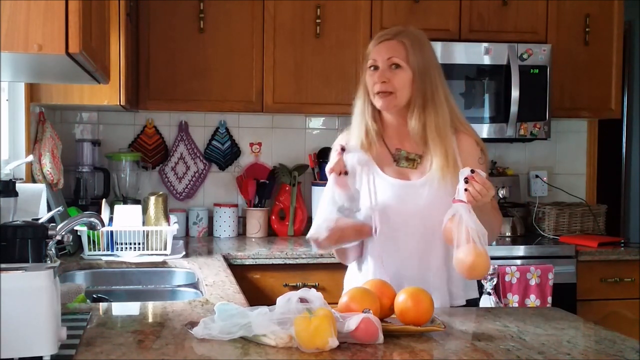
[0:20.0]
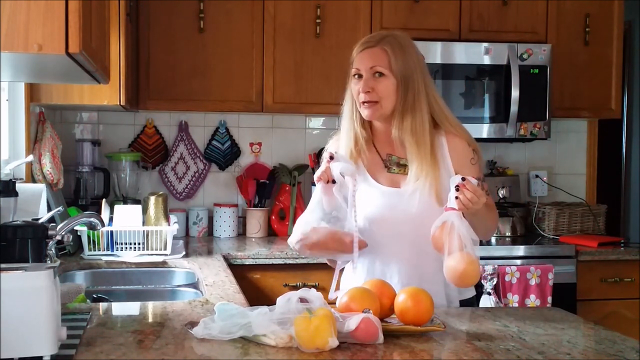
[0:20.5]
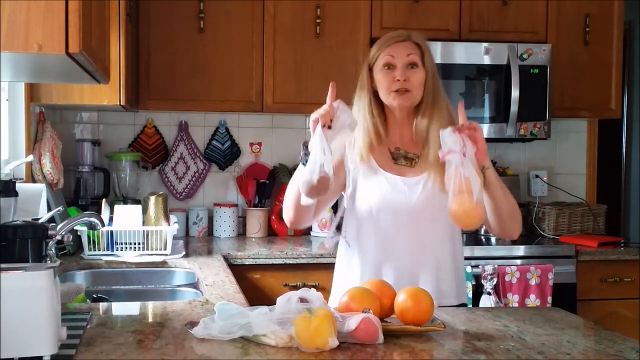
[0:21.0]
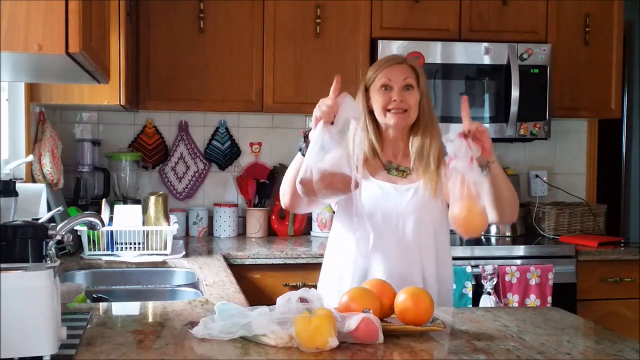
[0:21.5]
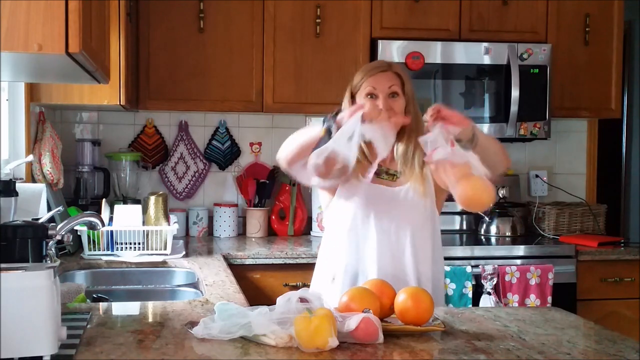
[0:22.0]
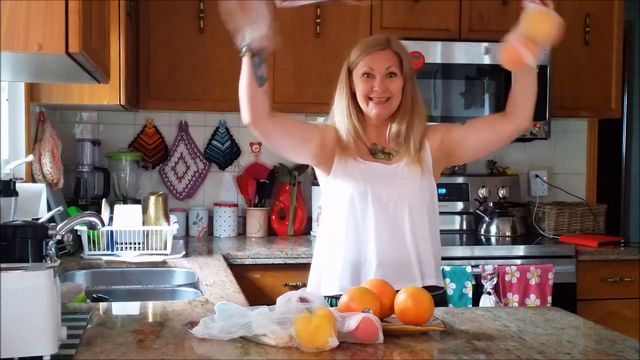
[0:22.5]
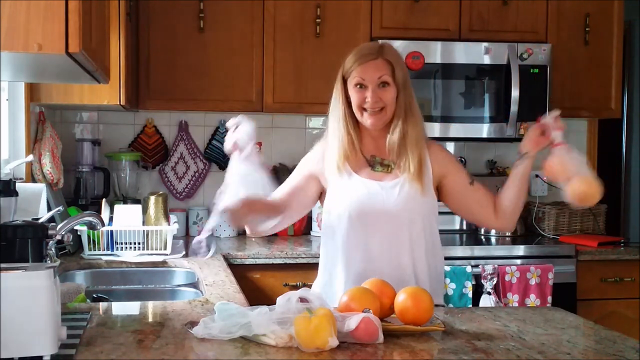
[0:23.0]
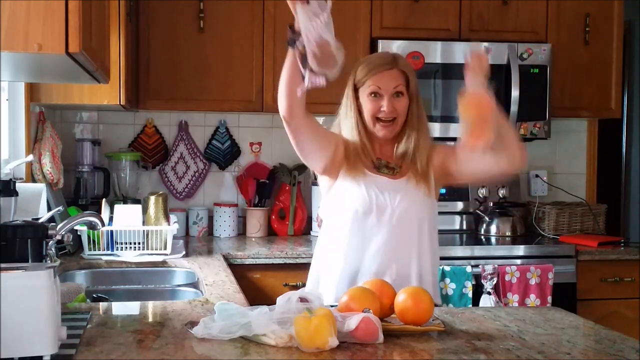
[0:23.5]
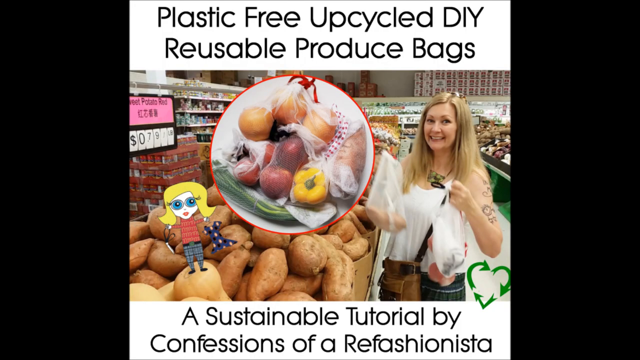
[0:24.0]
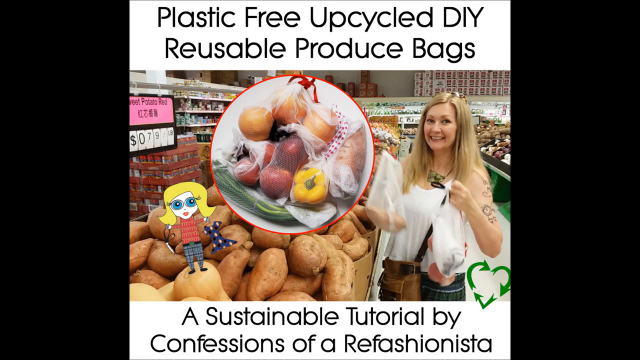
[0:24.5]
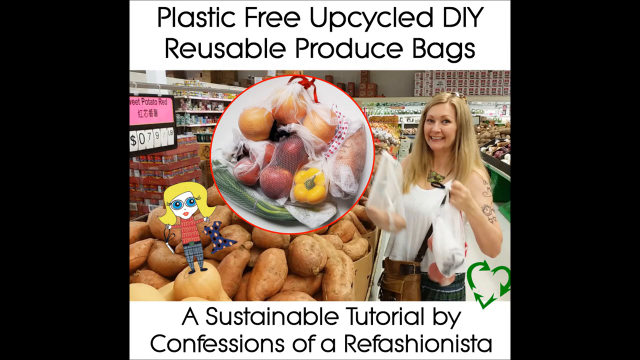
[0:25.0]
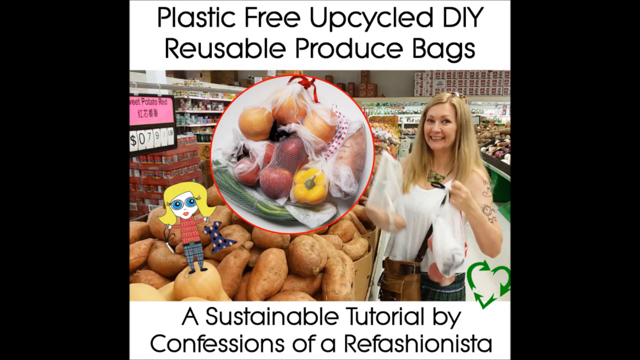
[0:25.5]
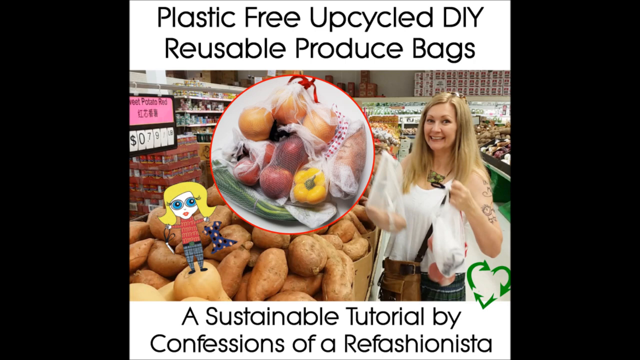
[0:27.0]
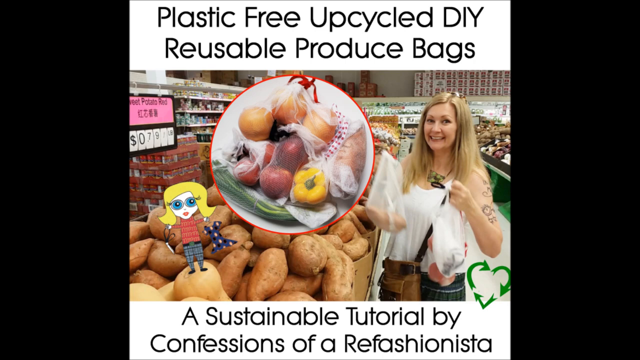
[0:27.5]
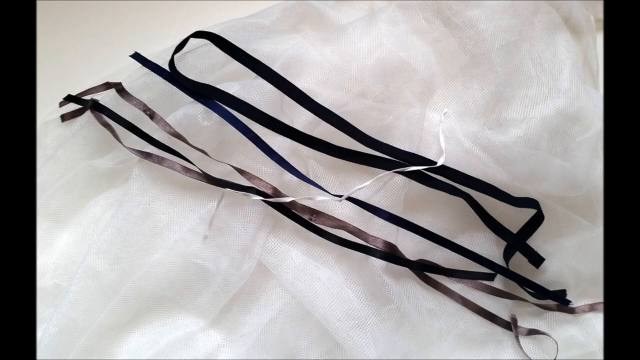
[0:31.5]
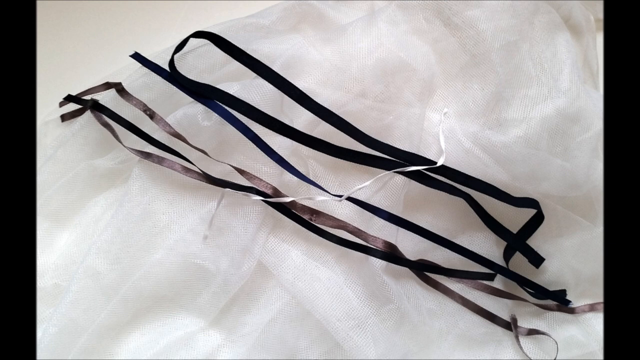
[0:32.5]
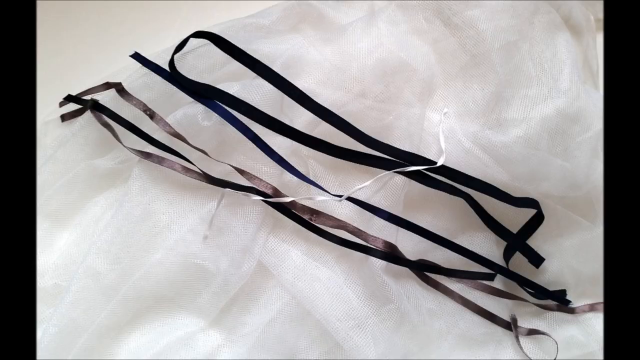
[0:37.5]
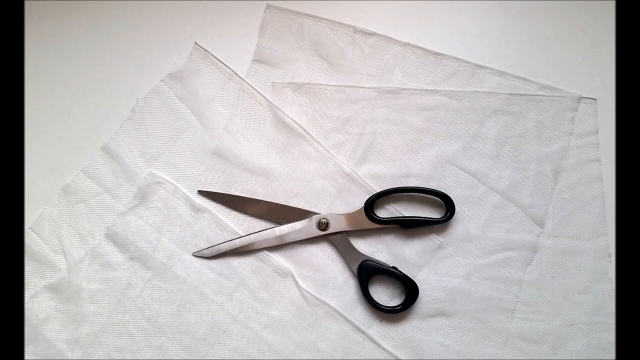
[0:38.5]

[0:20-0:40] The woman, who seems very energetic, holds one orange and one sweet potato along with the reusable bags. A picture shows her in a grocery market. On-screen text begins "plastic free" and continues "diy reusable produce bag a sustainable story", apparently by her. Multiple pictures of fruit and vegetables are shown.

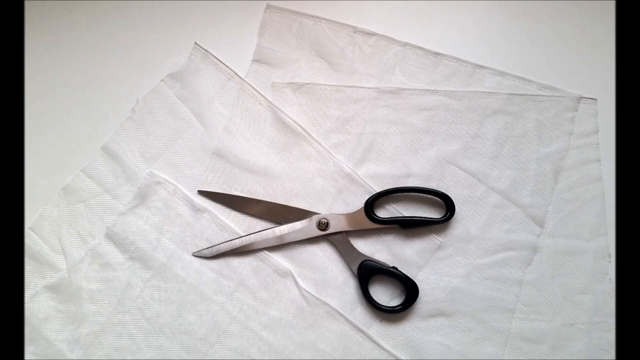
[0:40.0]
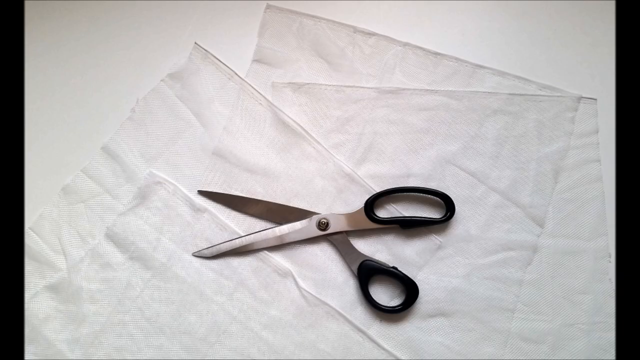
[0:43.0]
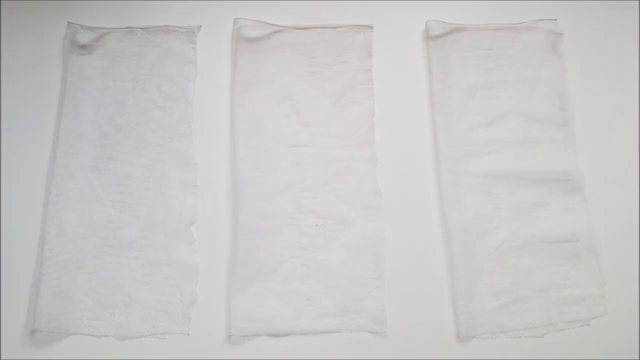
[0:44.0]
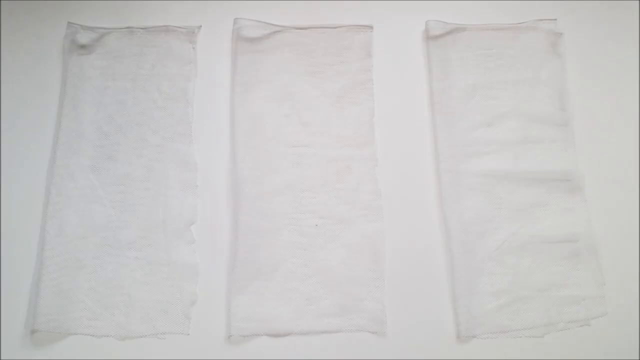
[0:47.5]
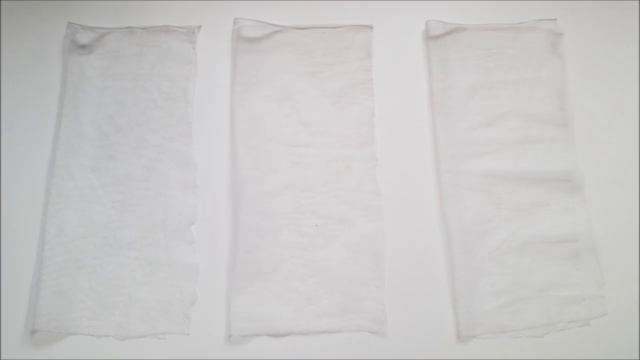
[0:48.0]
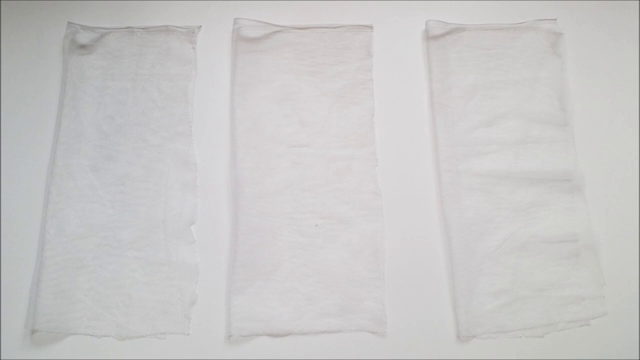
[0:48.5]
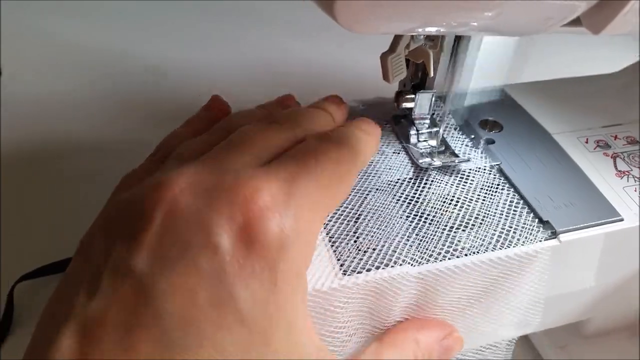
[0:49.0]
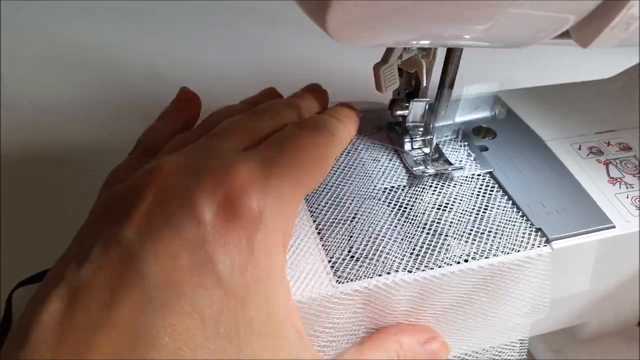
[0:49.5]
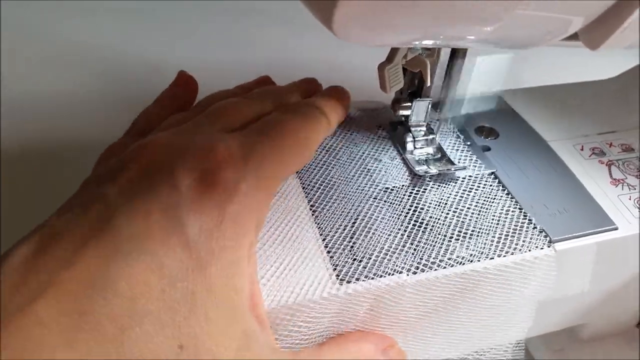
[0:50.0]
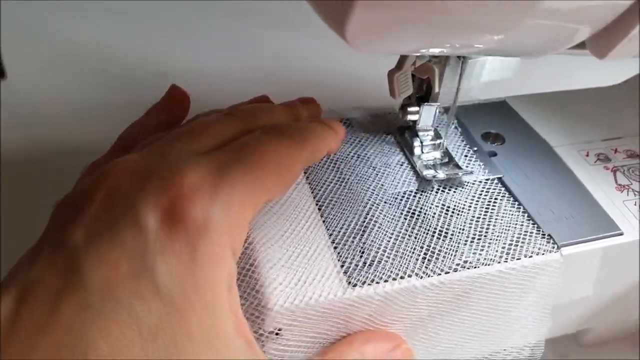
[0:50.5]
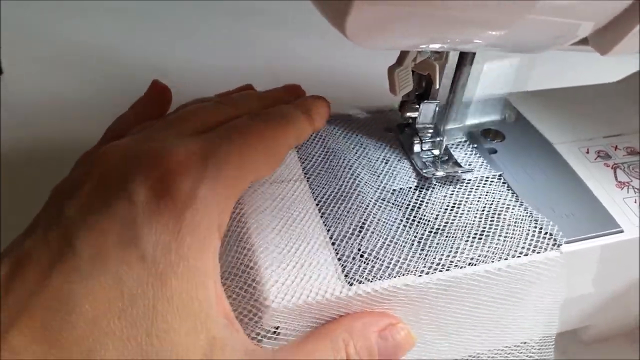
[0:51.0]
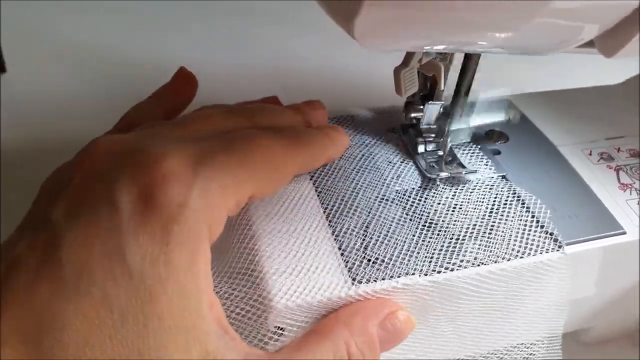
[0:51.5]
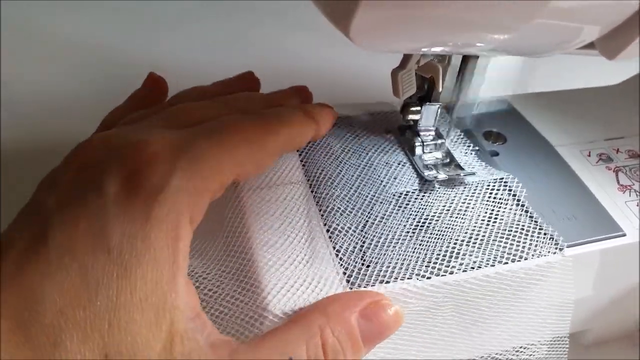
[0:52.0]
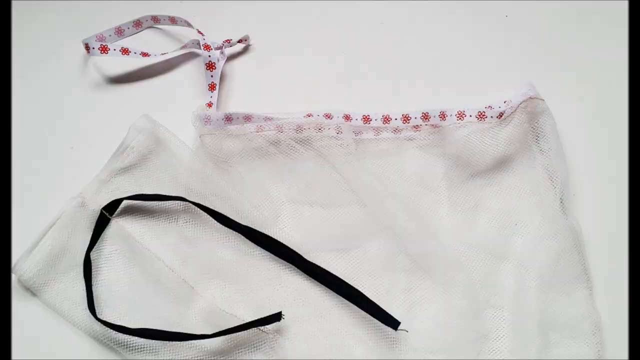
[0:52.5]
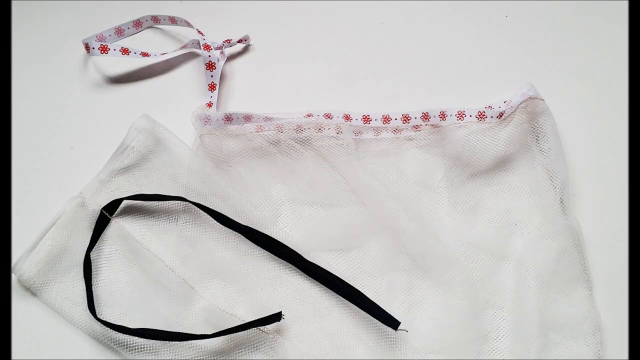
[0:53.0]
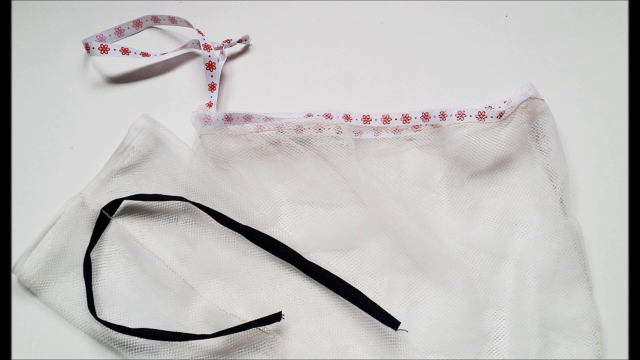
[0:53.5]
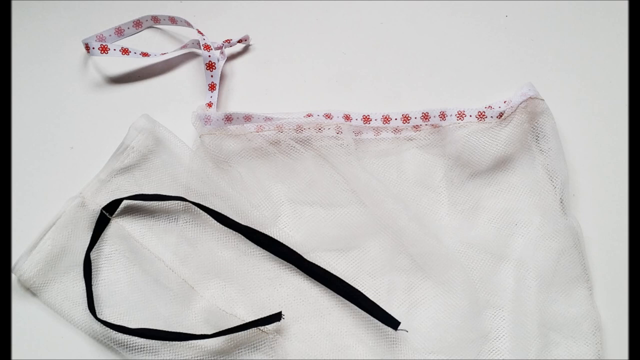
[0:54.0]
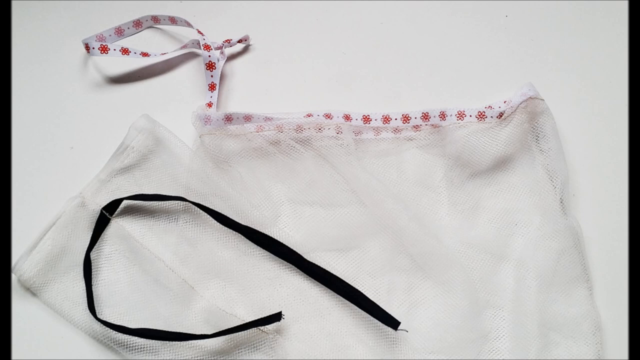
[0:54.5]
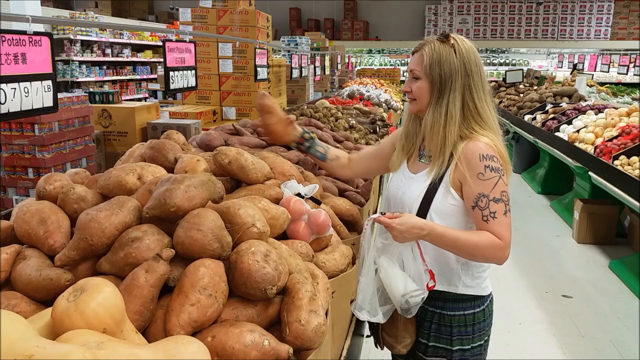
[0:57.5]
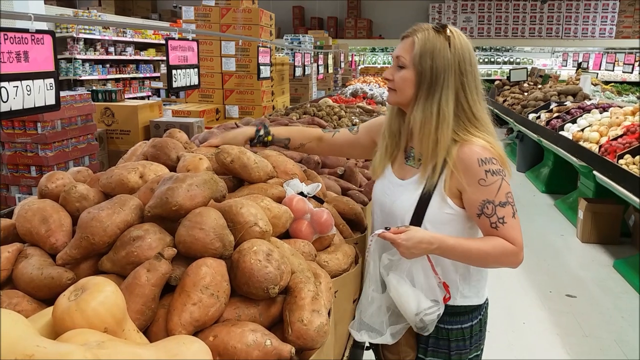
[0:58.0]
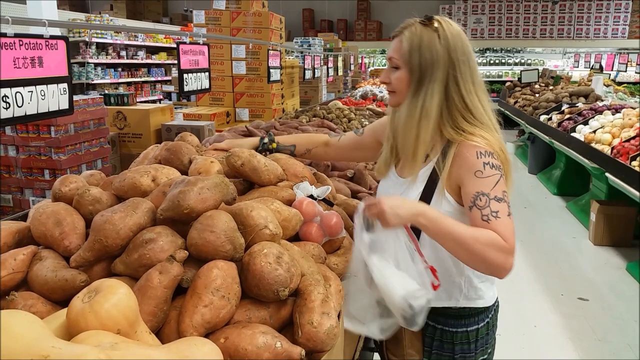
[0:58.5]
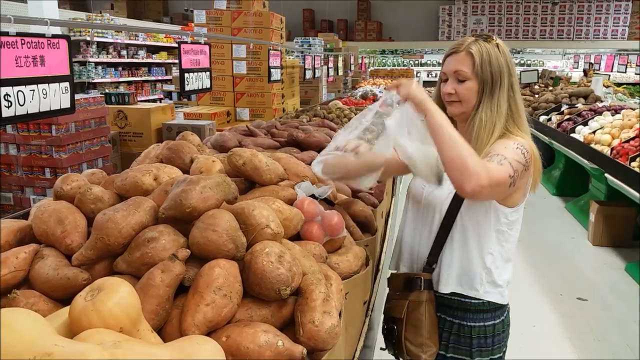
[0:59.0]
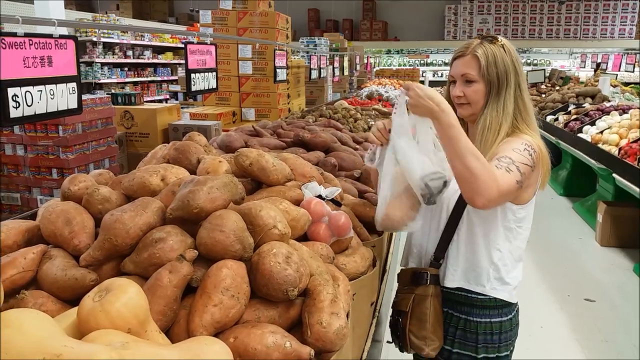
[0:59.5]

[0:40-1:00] An image shows some sort of reusable bags; it is unclear whether they are the same reusable bags as before. The woman seems to cut these bags in half. Footage of a sewing machine then appears, and sewing the plastic bags together apparently makes one big plastic bag. Next, the woman seems to be shopping for some sort of potatoes using the reusable bags she created.